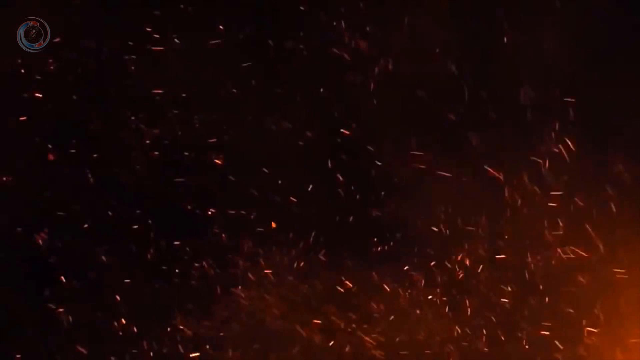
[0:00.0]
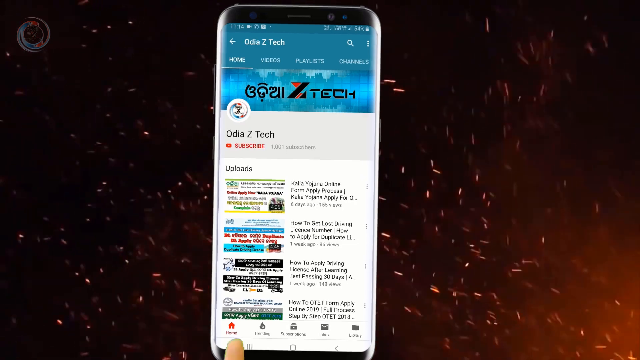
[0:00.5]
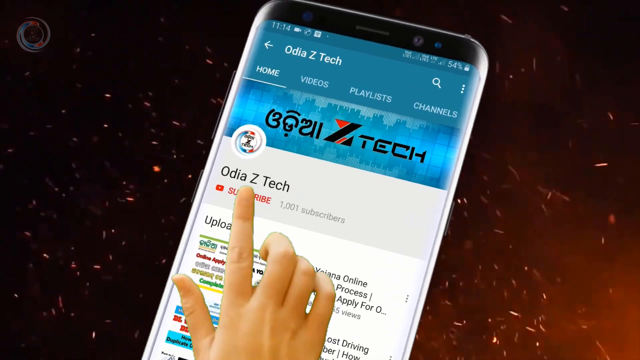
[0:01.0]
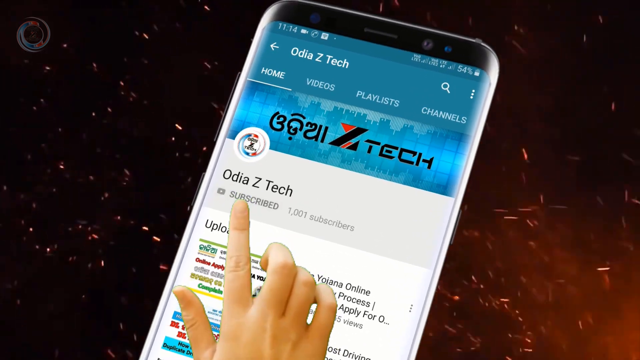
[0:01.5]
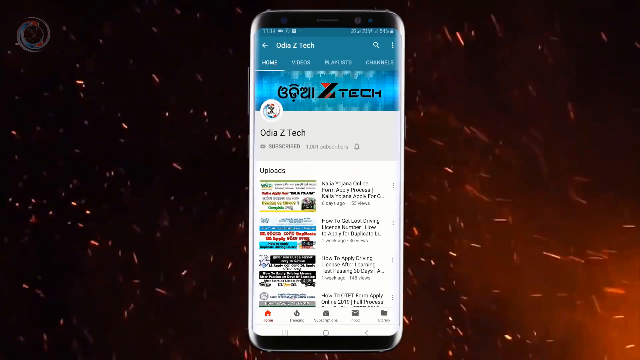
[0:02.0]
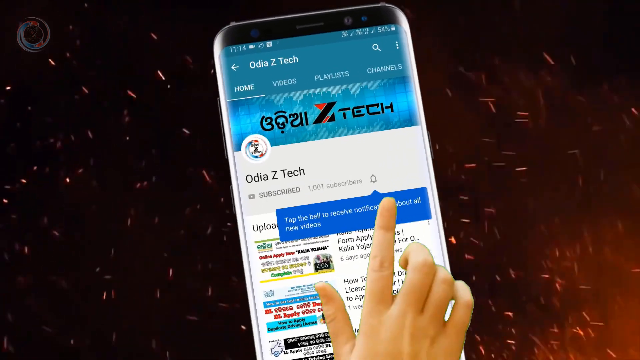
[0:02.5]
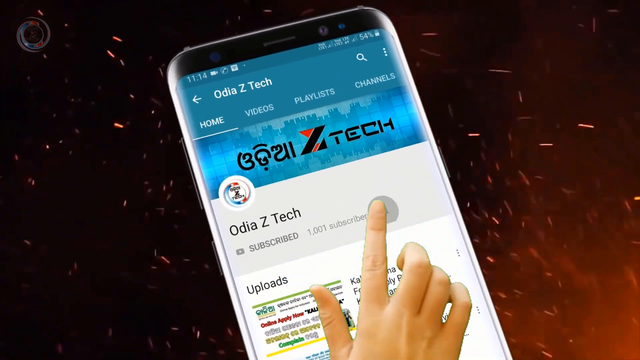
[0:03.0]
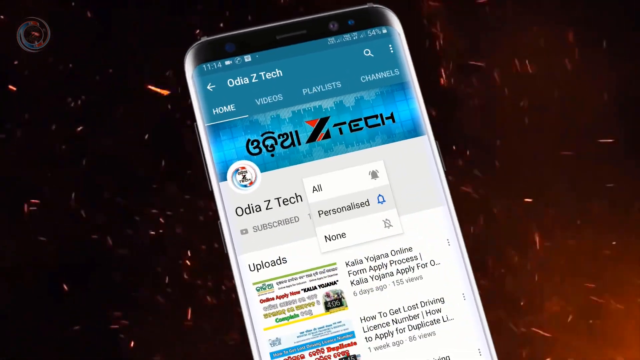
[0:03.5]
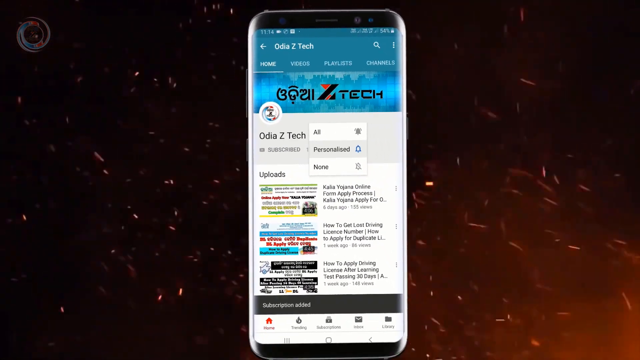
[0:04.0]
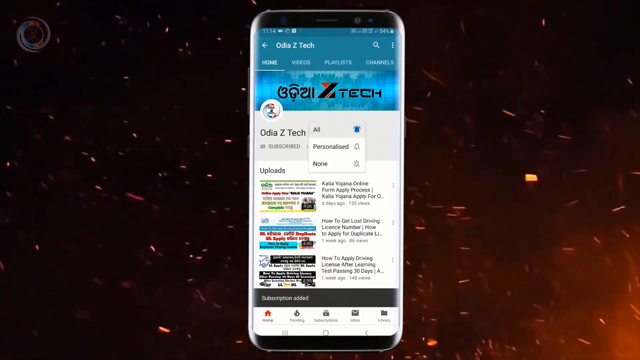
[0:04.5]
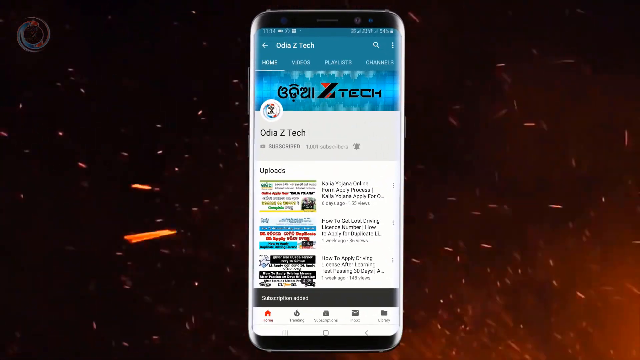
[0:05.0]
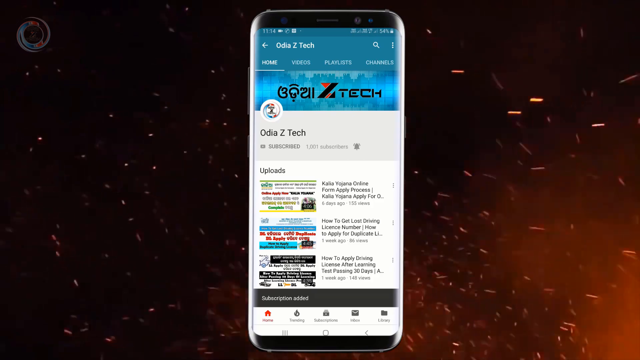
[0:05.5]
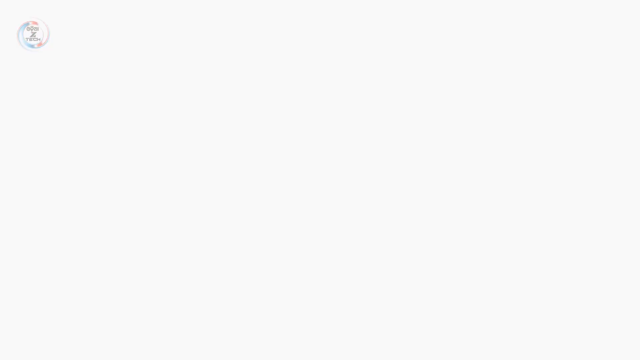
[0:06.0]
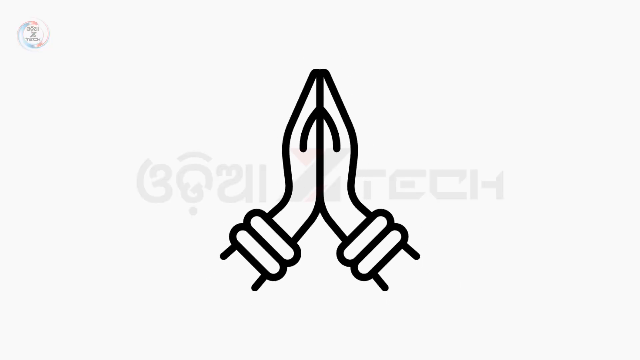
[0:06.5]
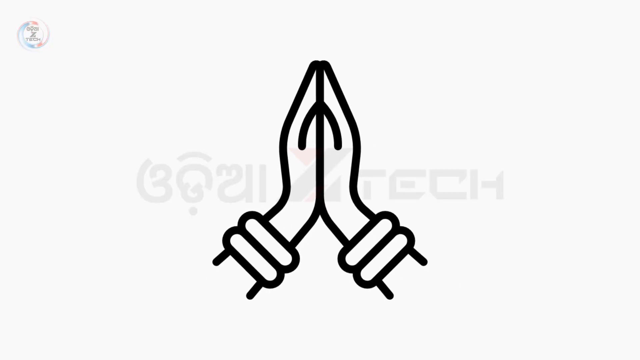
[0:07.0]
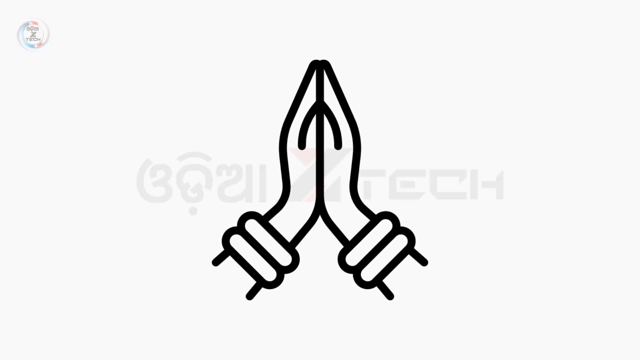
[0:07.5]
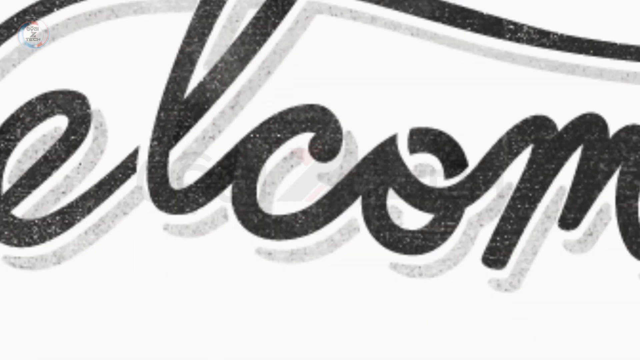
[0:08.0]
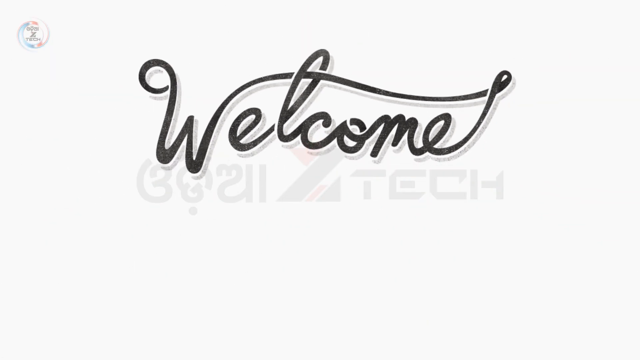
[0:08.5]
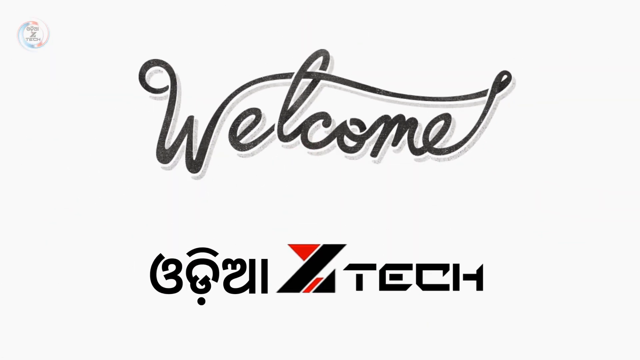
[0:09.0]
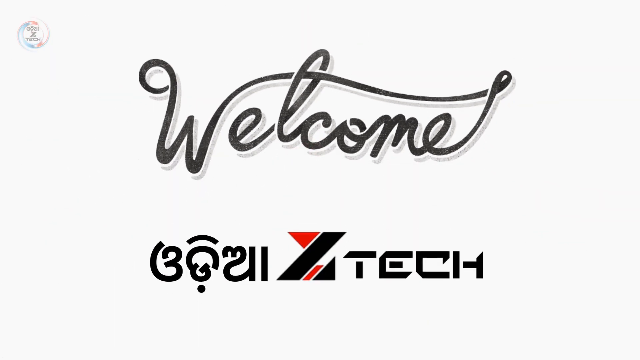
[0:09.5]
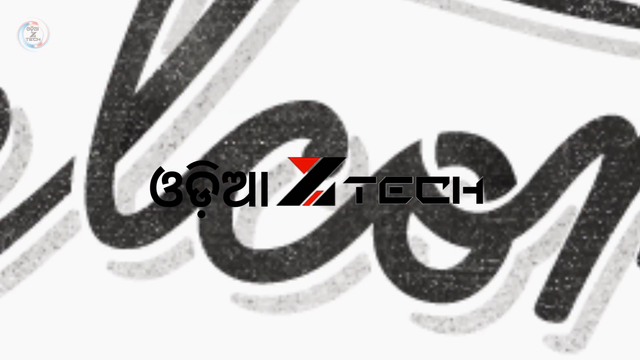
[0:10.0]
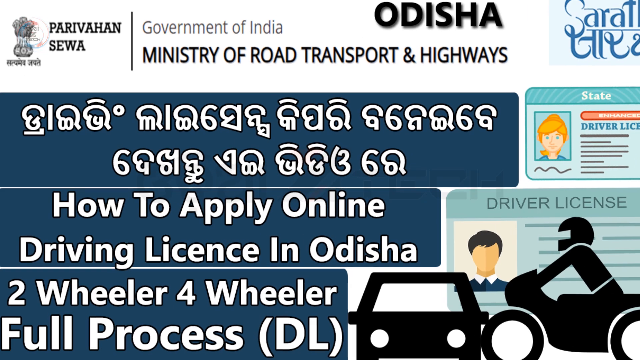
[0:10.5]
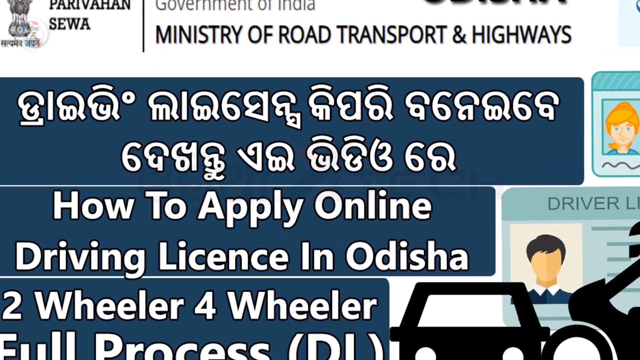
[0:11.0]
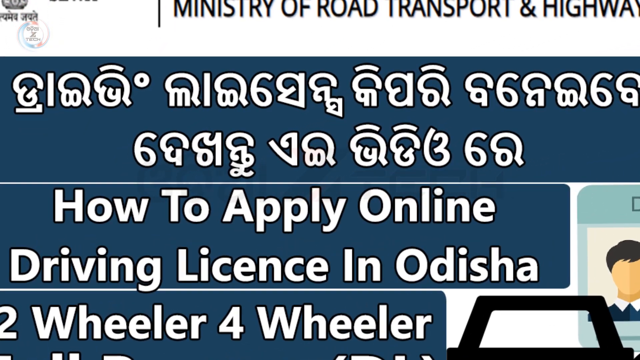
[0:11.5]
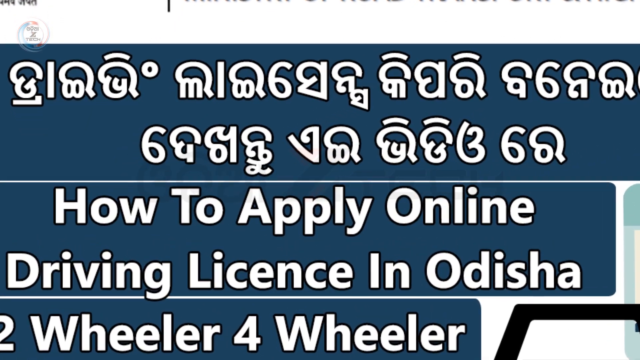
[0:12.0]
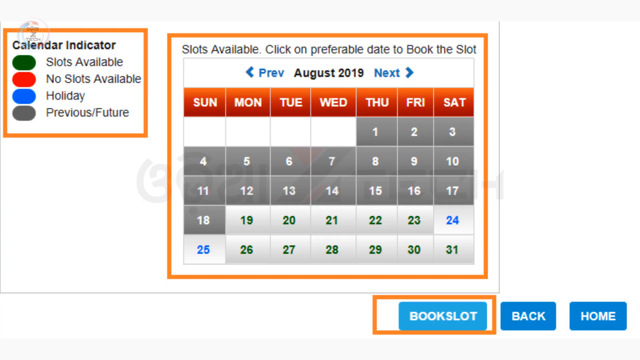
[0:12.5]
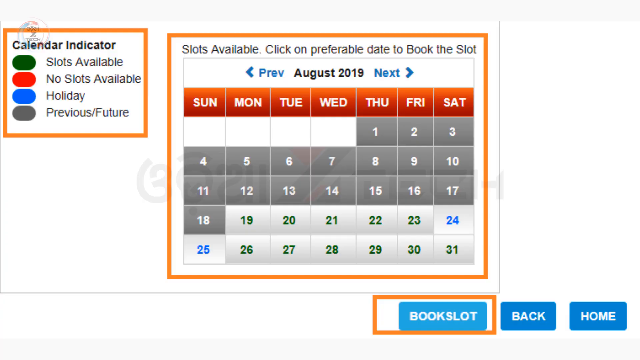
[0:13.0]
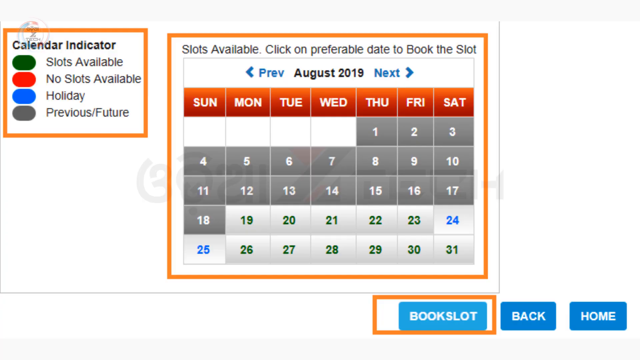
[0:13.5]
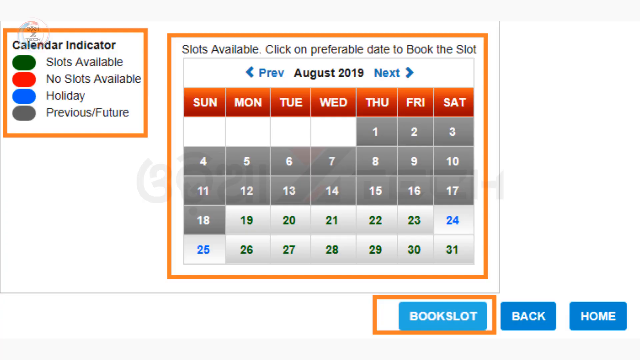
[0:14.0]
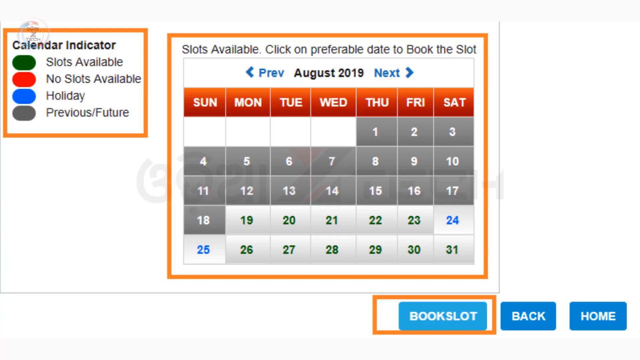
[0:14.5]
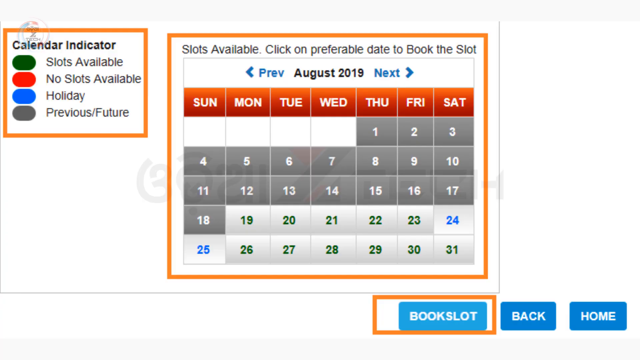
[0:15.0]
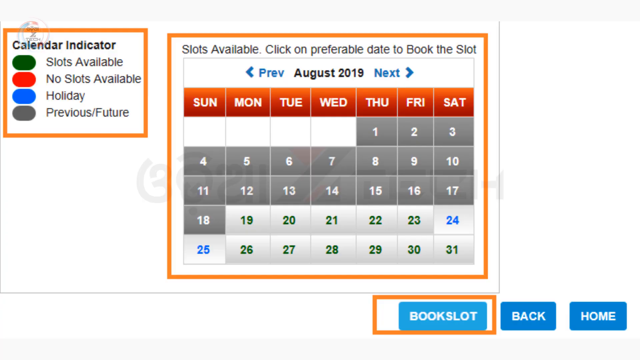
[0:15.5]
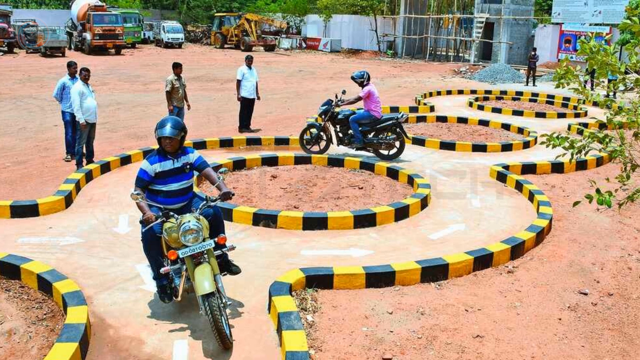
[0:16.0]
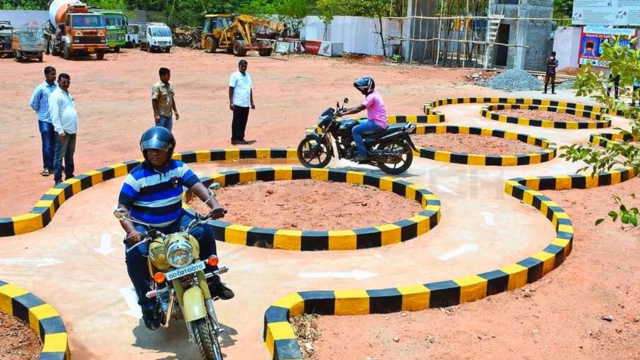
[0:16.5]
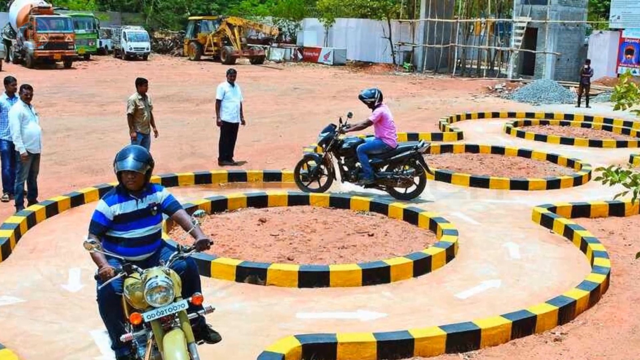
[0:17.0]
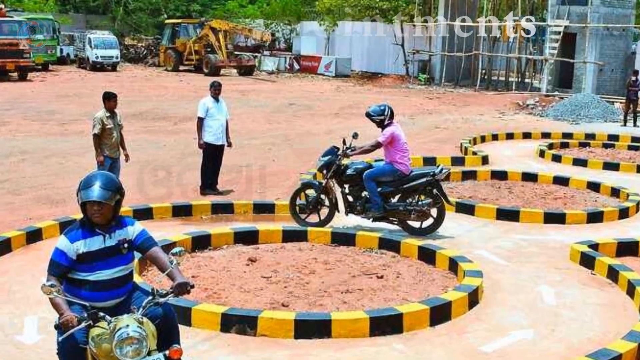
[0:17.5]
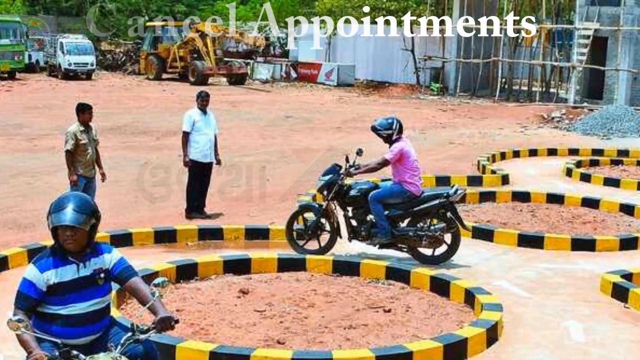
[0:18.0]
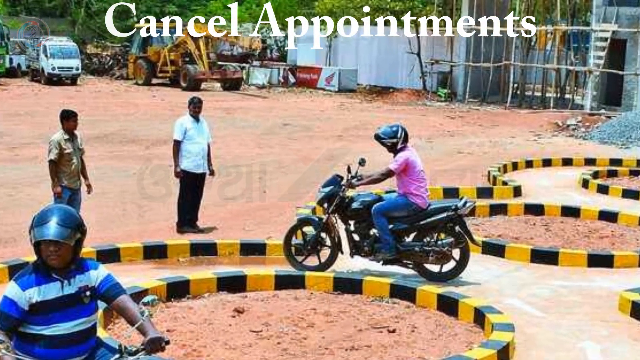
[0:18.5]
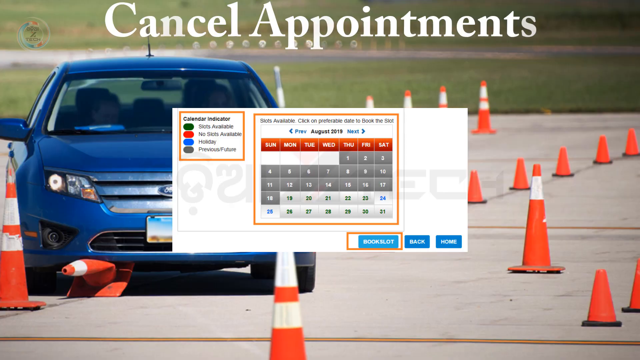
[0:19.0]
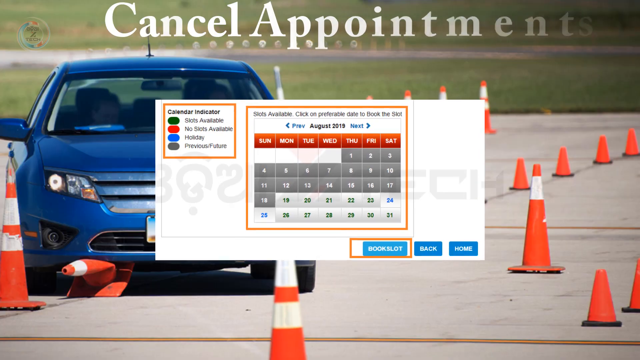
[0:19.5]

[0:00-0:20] A hand appears, and a finger taps the home button and then the subscribe bell for a page called odia z tech. The screen moves on to an image of hands clasped in prayer with the word "welcome". Several pages follow quite quickly, one focusing on a calendar date, and then a still image reading "cancel appointments" with a bicyclist on it. The pages seem to concern riding or driving, though it is not certain whether by bike or car; text reads "two-wheeler four-wheeler", bikes appear in one image and a car in another.